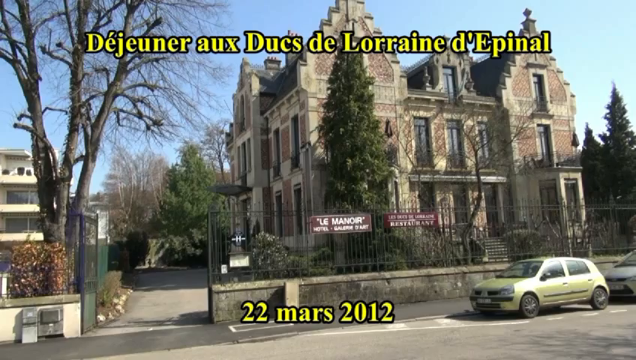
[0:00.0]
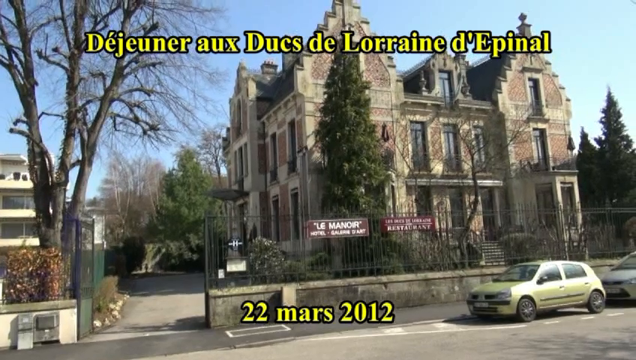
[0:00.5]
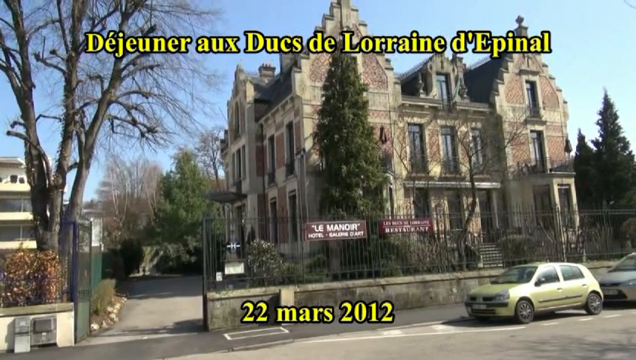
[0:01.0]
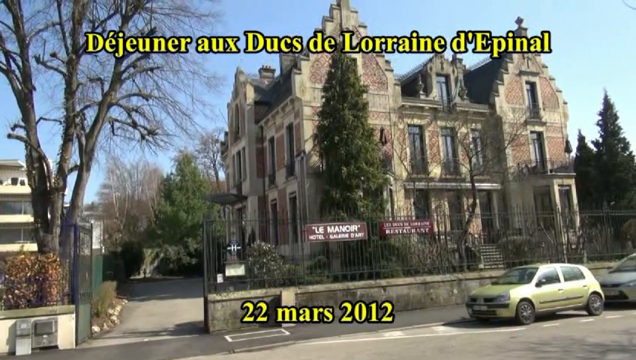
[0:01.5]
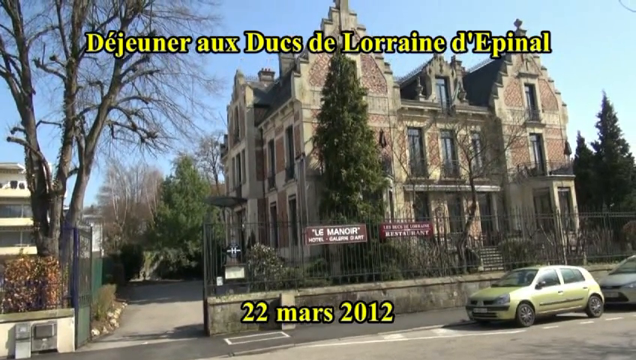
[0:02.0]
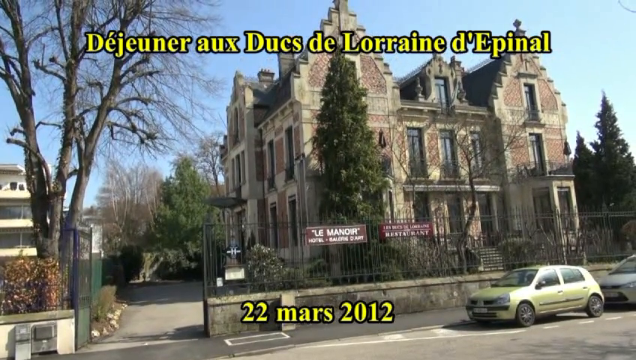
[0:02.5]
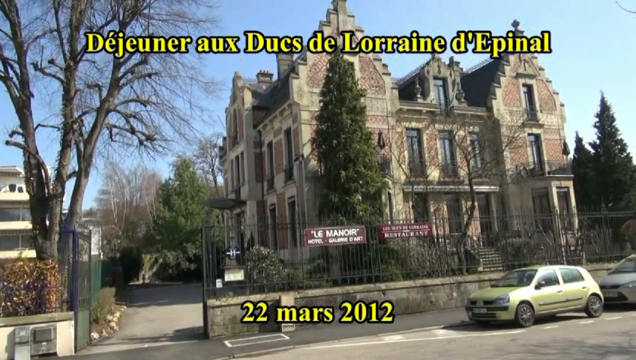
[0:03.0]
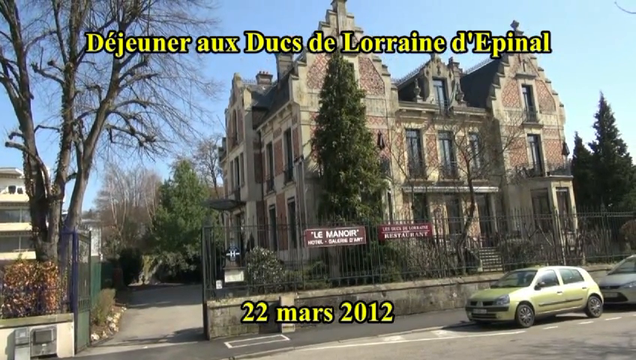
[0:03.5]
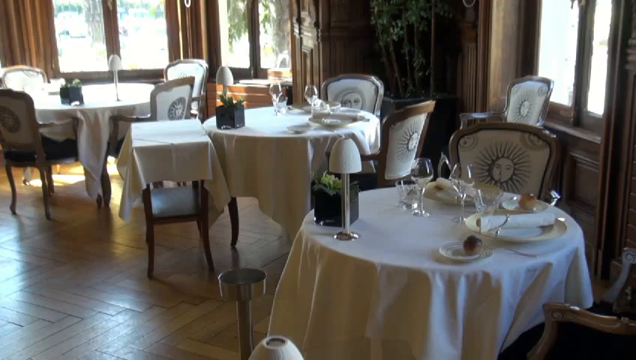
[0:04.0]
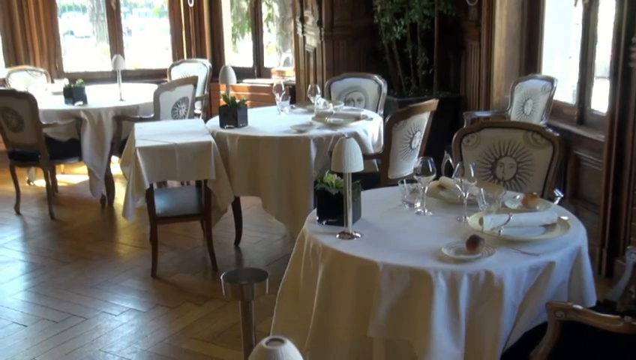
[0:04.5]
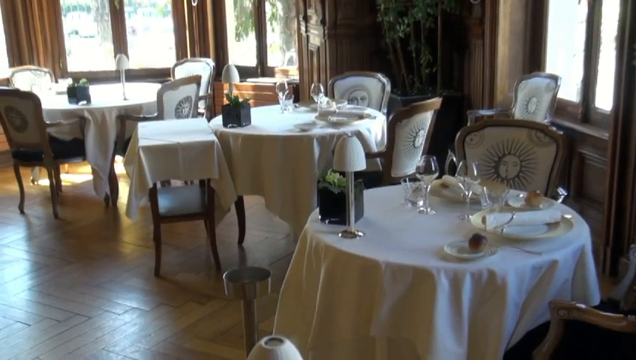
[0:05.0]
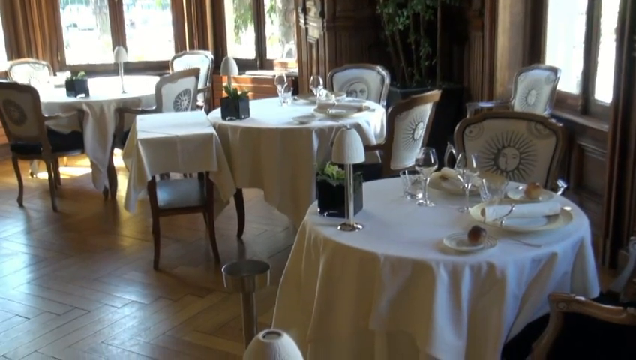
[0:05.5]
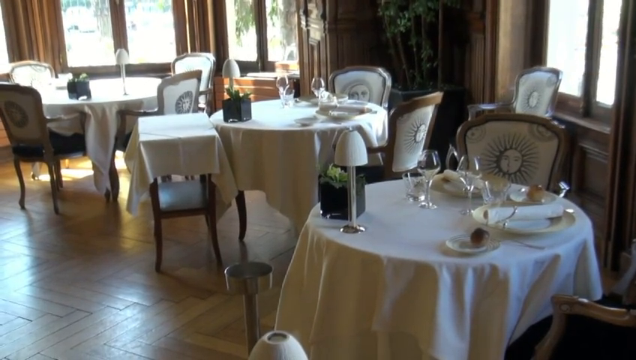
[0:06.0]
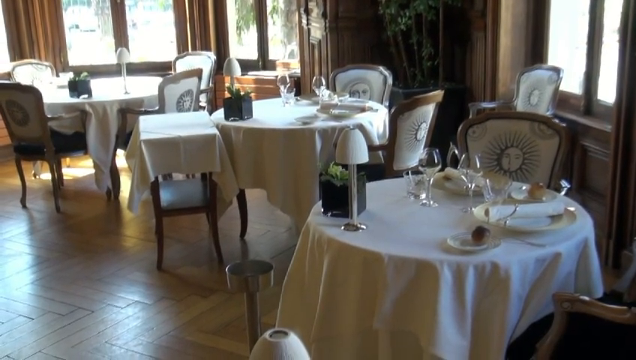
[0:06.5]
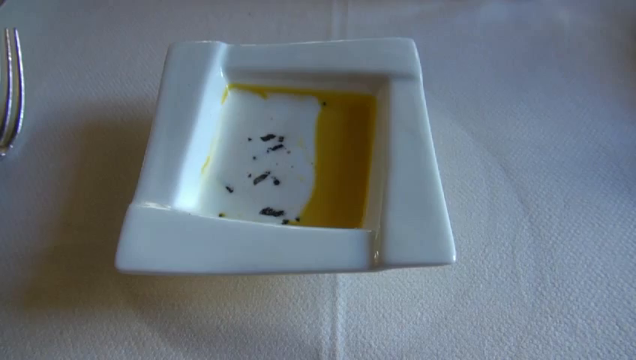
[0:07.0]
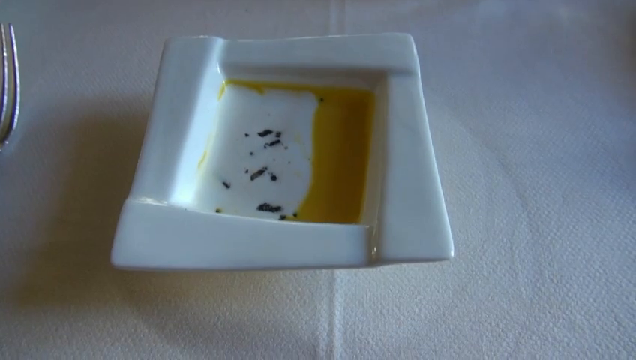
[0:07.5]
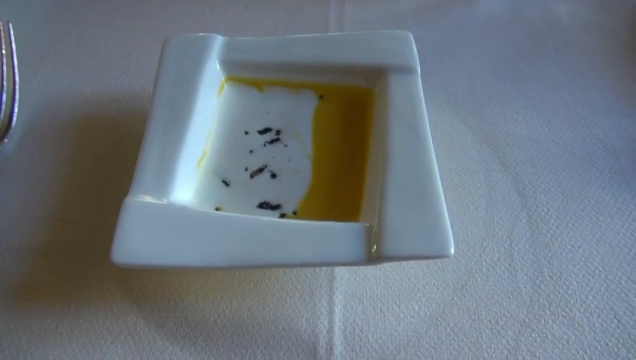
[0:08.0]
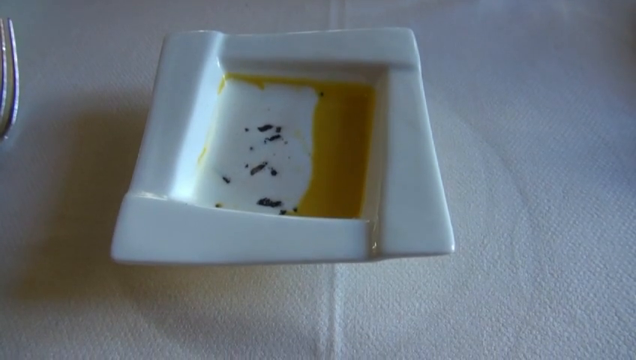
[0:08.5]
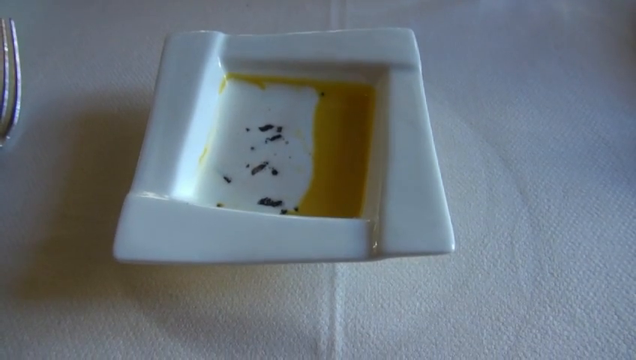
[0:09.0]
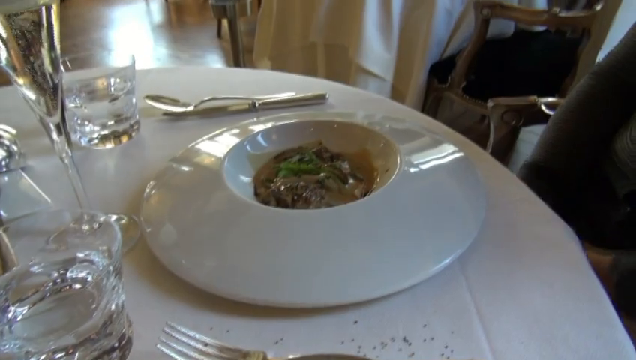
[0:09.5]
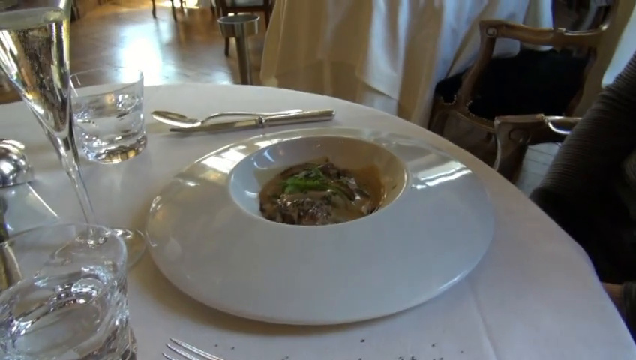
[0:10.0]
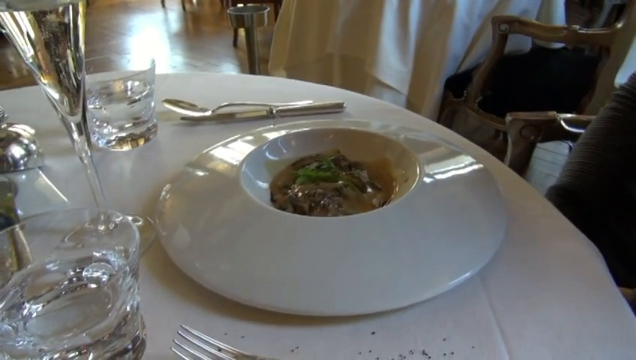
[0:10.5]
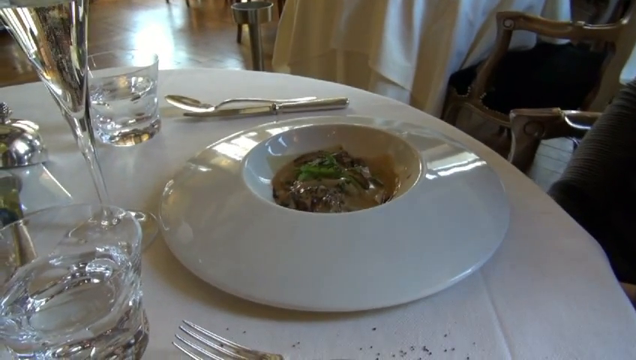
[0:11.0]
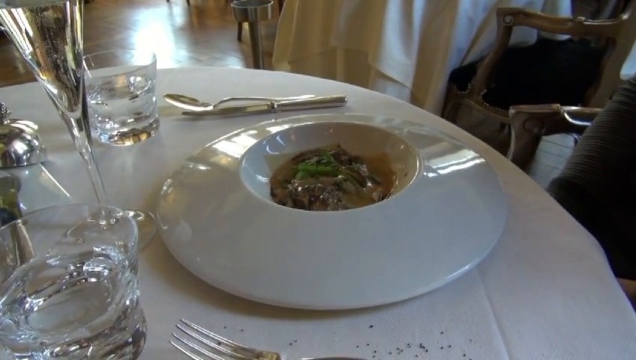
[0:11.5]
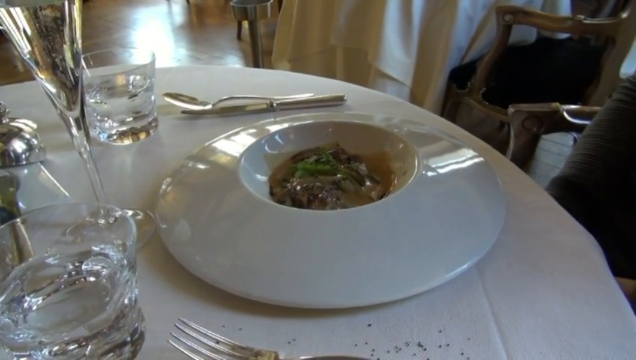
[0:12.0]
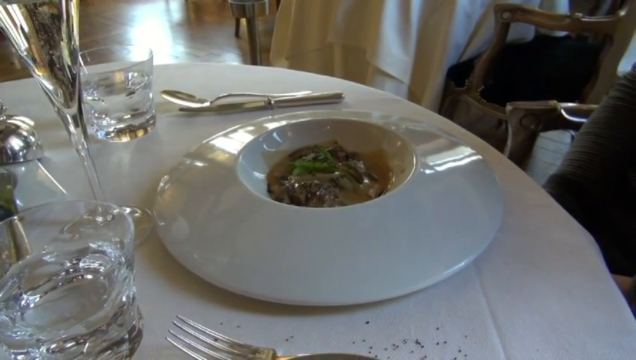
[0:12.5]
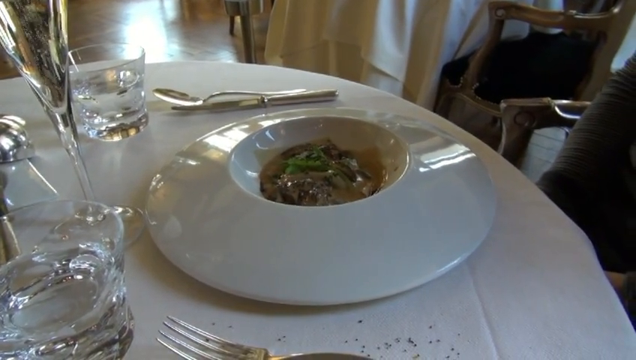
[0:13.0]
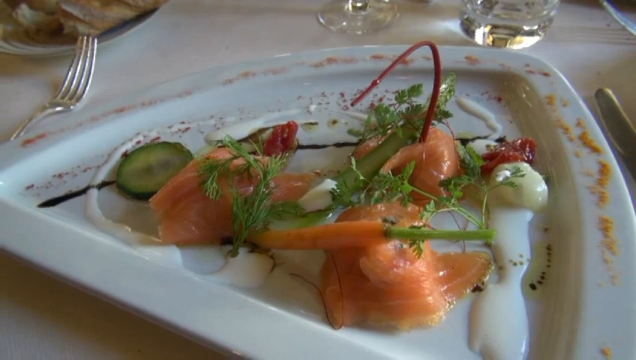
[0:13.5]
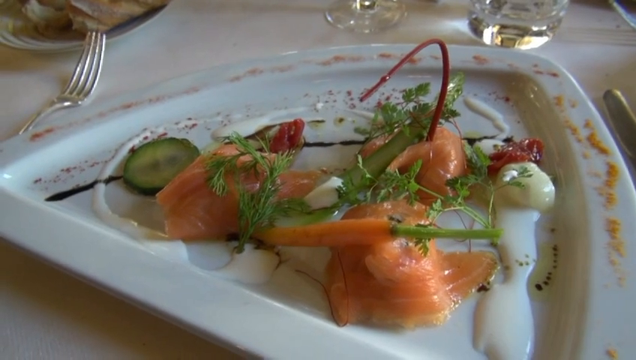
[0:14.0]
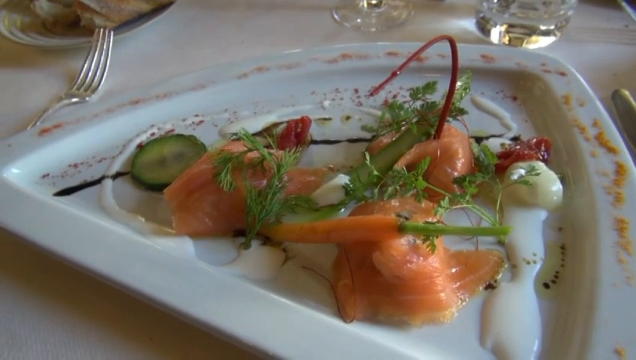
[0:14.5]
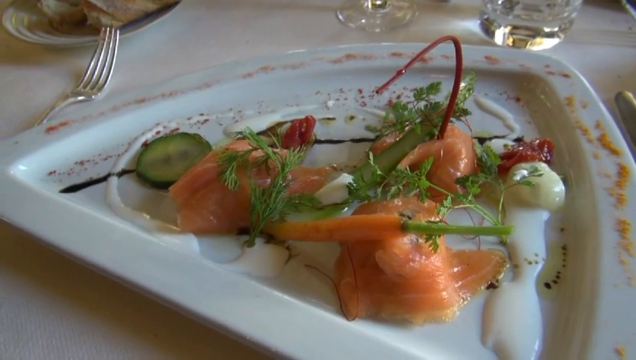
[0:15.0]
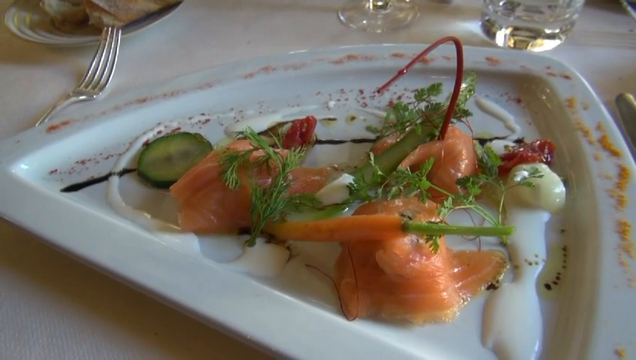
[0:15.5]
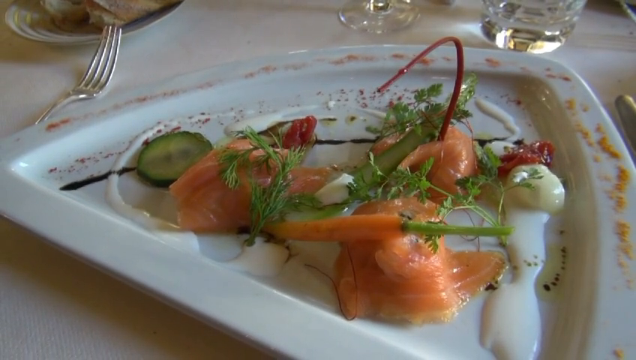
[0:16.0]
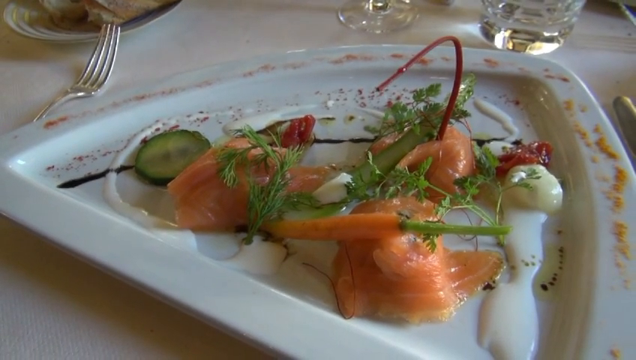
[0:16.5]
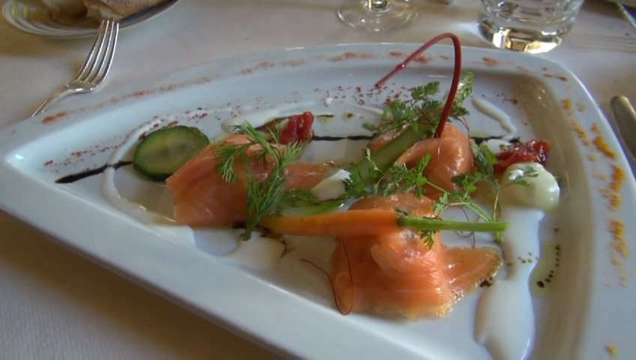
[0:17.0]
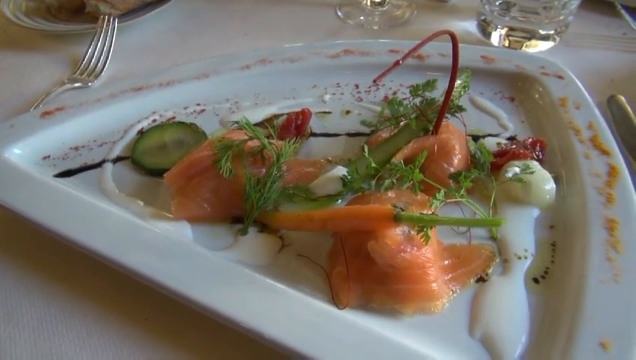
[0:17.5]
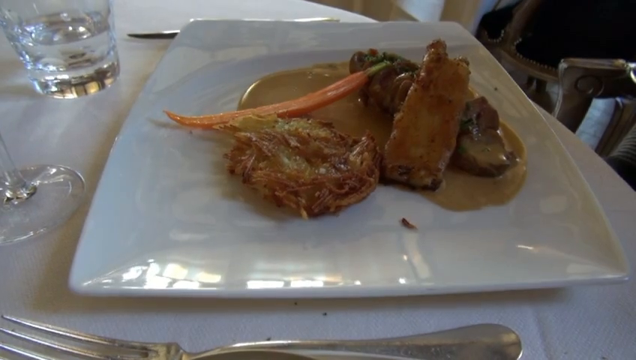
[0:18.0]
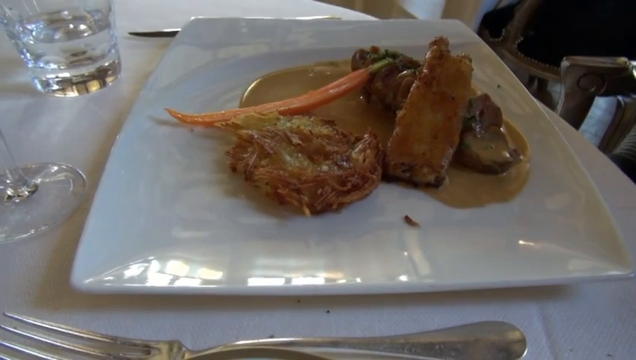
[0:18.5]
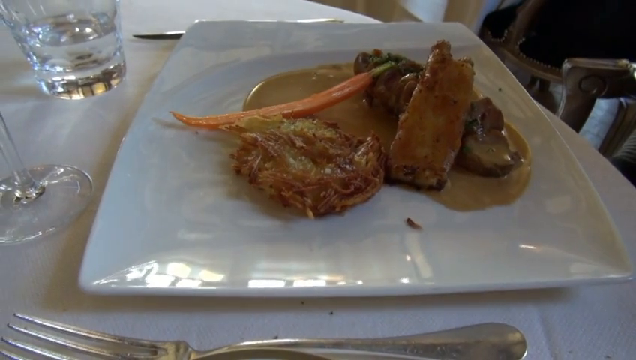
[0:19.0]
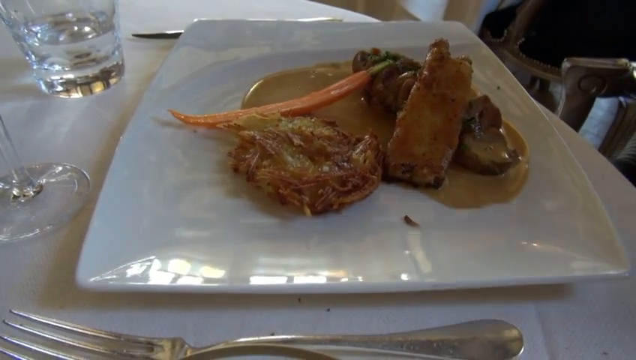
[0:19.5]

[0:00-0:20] A building that looks like a cathedral appears. Text at the bottom reads "22 M-A-R-S 2012" in yellow font with a black outline, and at the top there are six French words, possibly the name of the place. Cars are visible; although the text says 2012, some of the cars look a little older, maybe from the earlier 2000s. Something appears greenish yellow or gold, though it is hard to tell because of the sunlight; the sun is out. The building has two signs in French reading "le", "MANOR" and "hotel", so it is a hotel. The inside of the hotel is shown, with tables that have a sun image on them. There is a butter sauce pan, what seem to be unique bowls, and what looks like salmon.